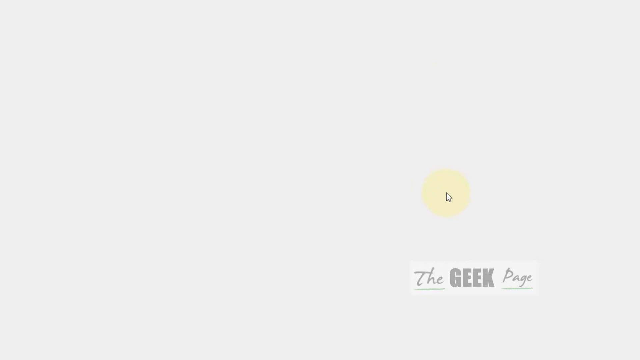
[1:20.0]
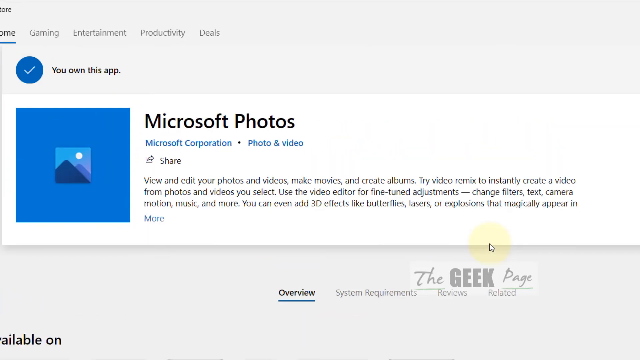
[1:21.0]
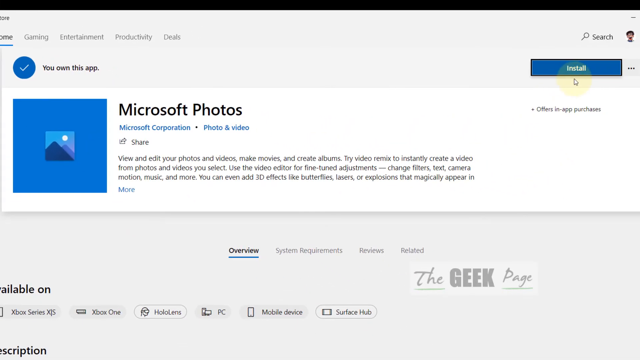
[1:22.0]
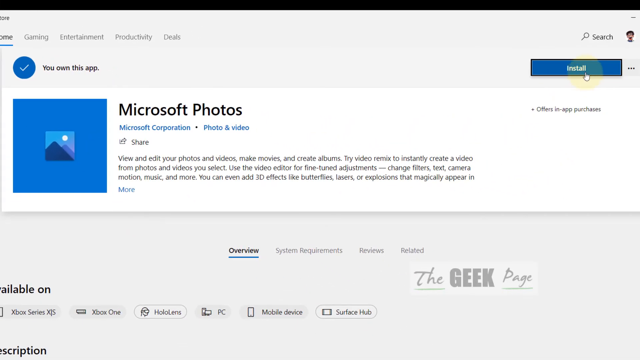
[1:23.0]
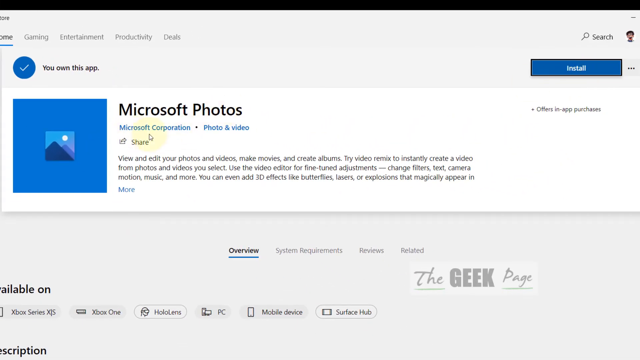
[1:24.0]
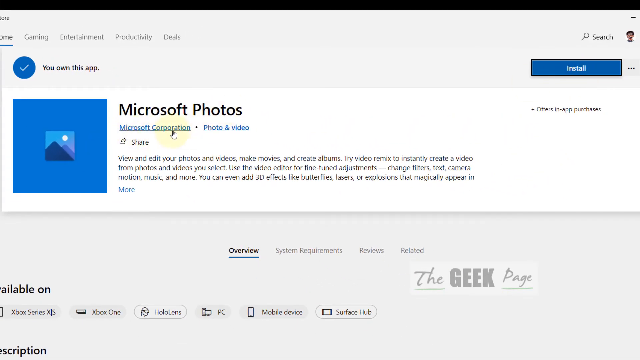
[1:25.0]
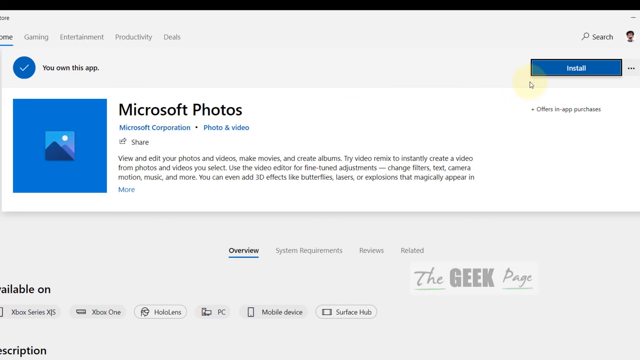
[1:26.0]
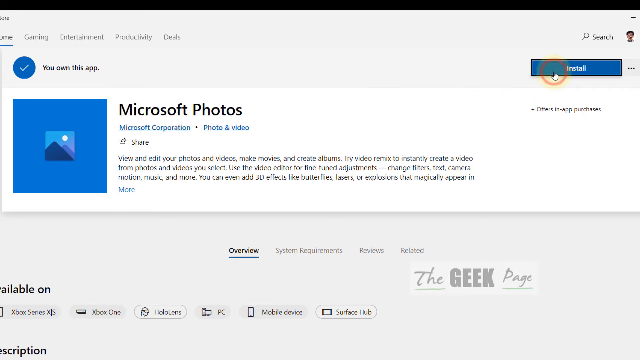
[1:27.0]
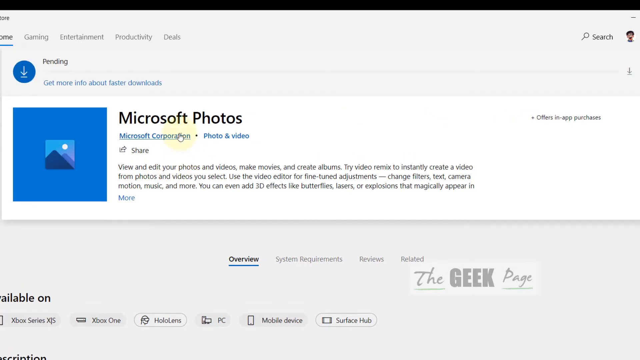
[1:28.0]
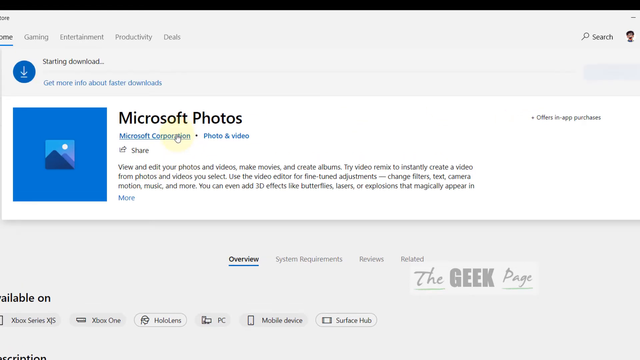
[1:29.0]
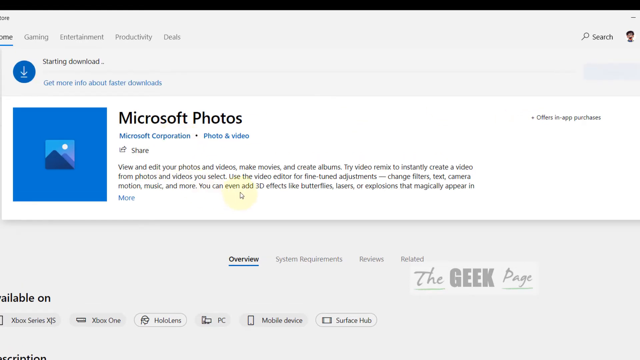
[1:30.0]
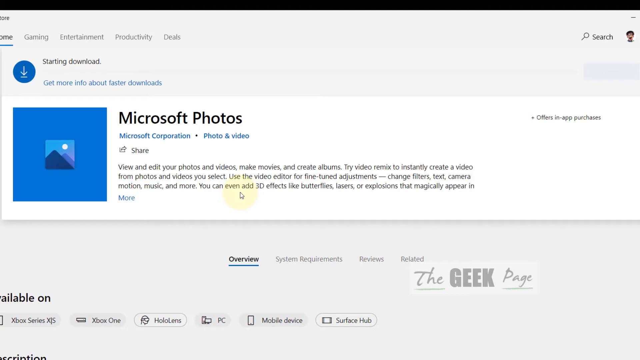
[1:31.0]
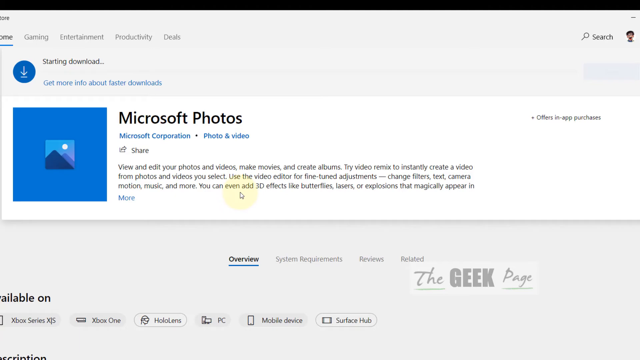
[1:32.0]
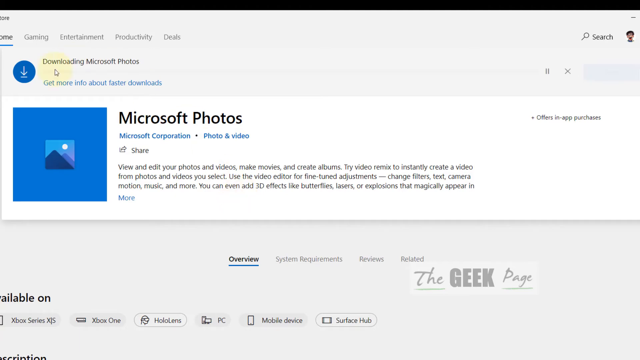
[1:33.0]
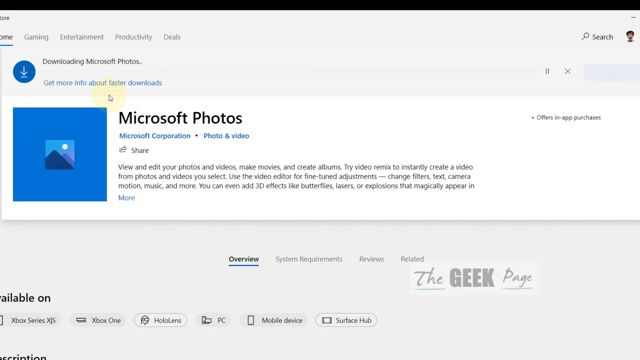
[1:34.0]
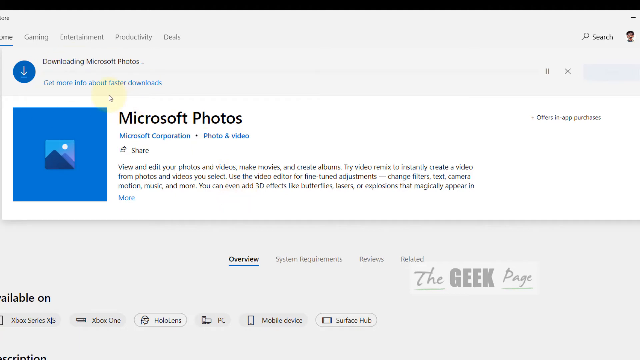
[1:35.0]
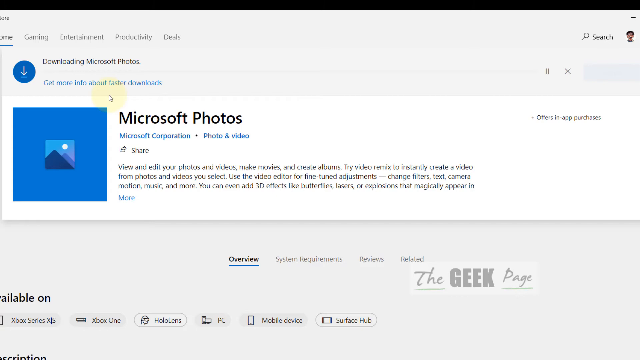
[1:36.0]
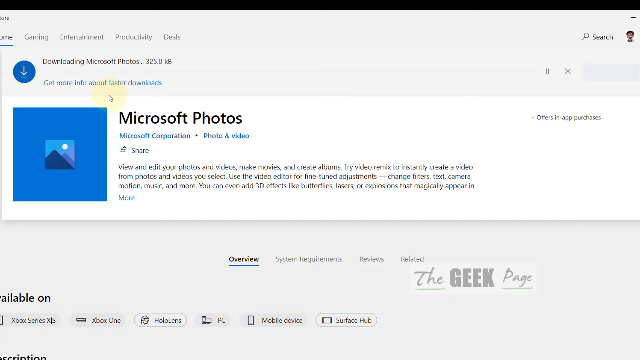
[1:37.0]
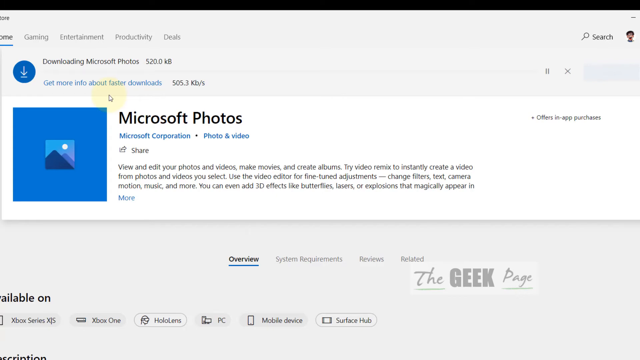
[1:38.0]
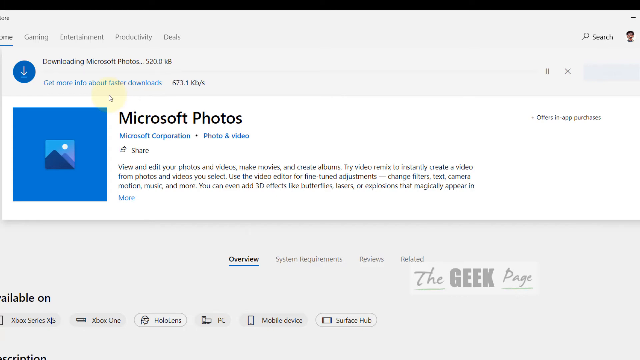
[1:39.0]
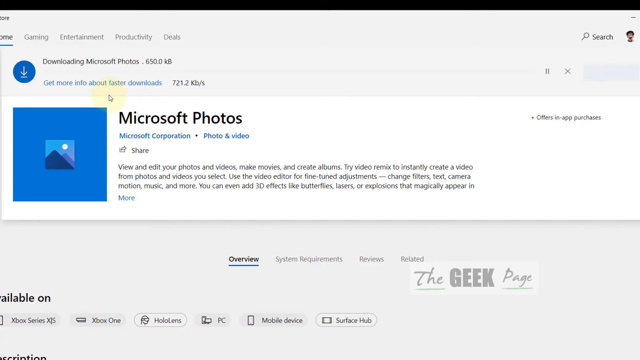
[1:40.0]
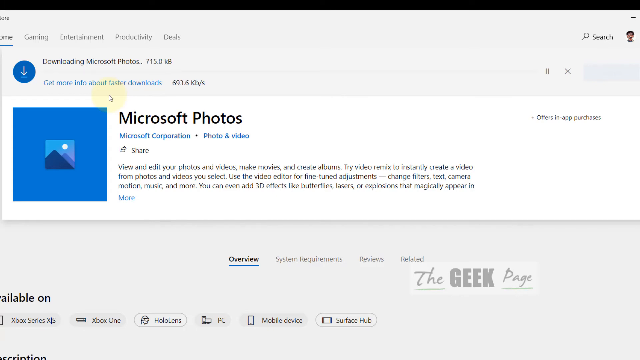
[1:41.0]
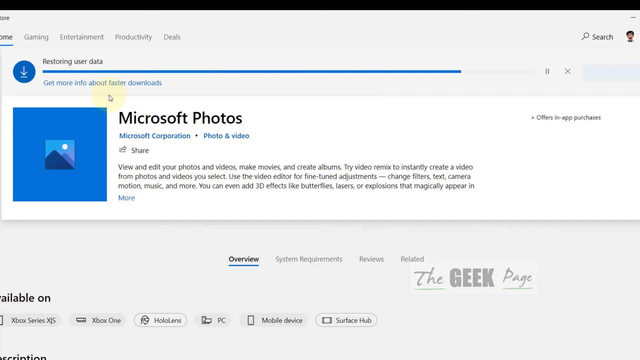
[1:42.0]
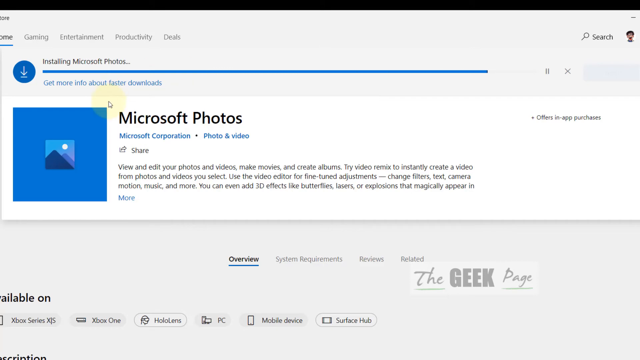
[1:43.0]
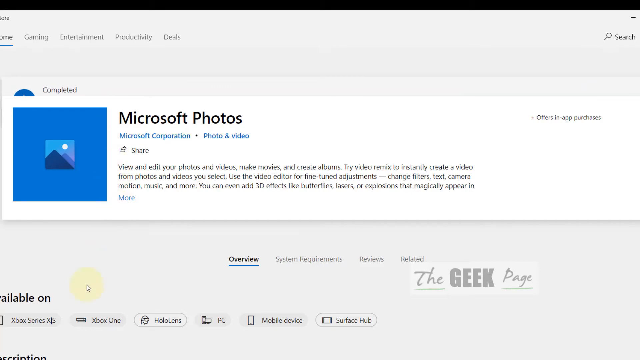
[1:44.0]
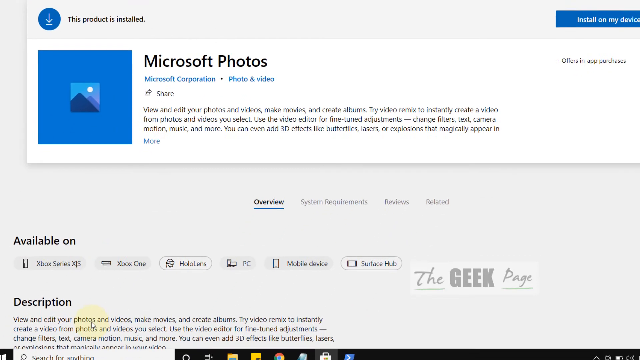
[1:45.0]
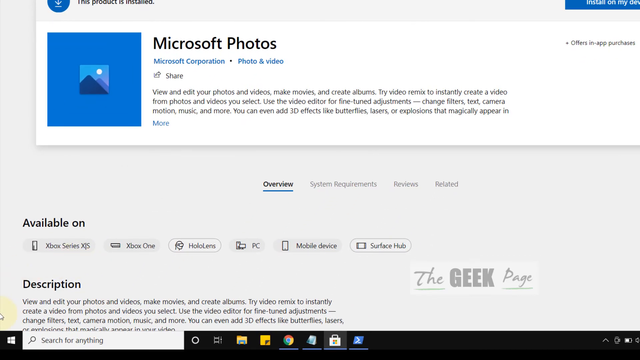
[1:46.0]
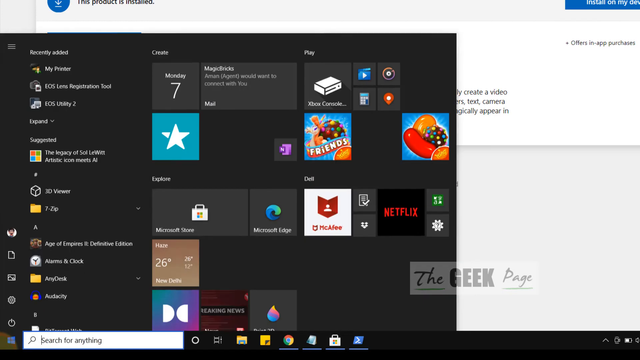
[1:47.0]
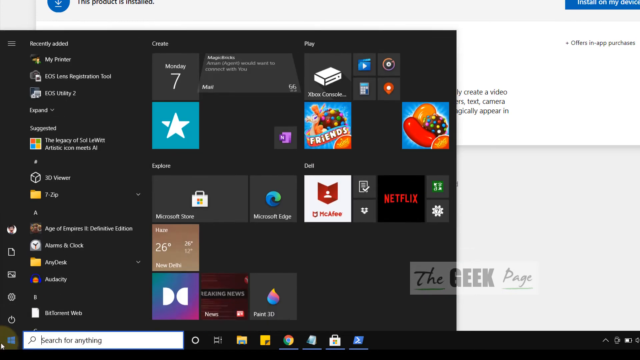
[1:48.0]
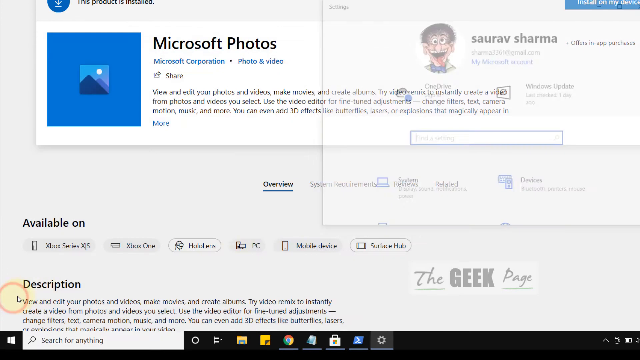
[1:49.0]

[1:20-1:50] A white screen appears, with "the geek page" in gray text in the lower right corner and the word "geek" bolded in light gray. The mouse travels around the page, and suddenly a pop-up reading "Microsoft Photos" on a white banner appears. The mouse clicks, and it reads "Microsoft Corporation Photo and Video" in blue text. Below that is the share button, and beneath that the text reads "view and edit your photos and videos. Make movies and create albums. Try video remix to instantly create a video from photos and videos that you select. Use the video editor for fine-tuned adjustments." In the upper right corner is a blue button that reads "install", with another search bar above it. There is also a cartoon image of a man's face, which may be the user profile.